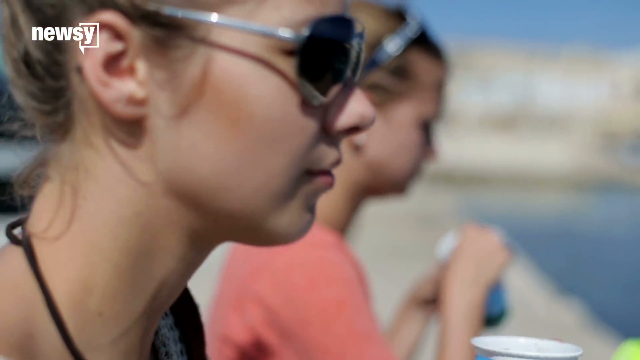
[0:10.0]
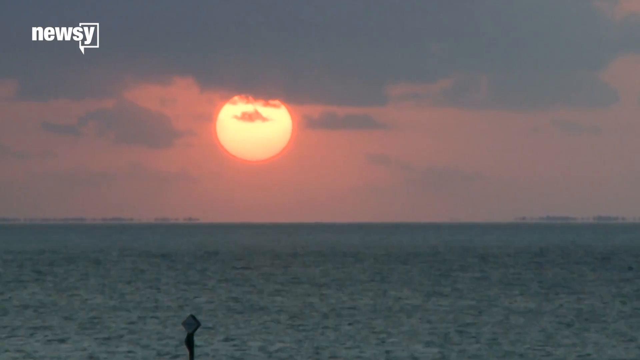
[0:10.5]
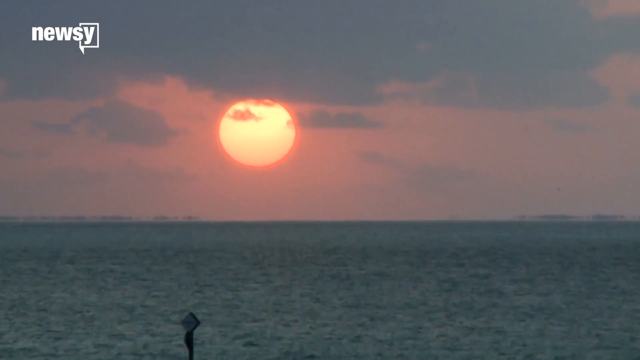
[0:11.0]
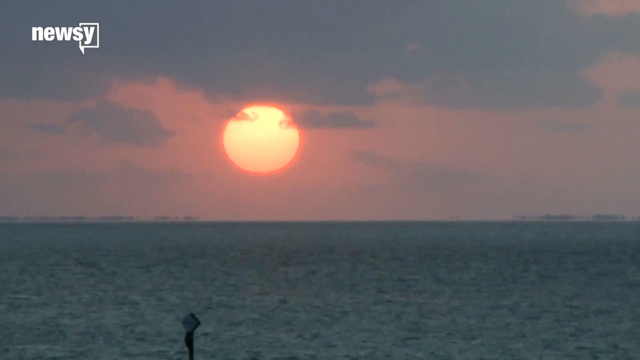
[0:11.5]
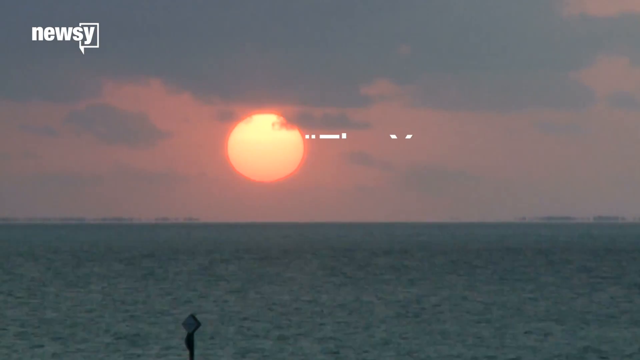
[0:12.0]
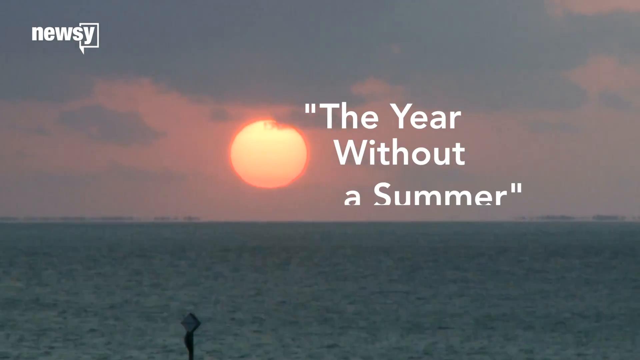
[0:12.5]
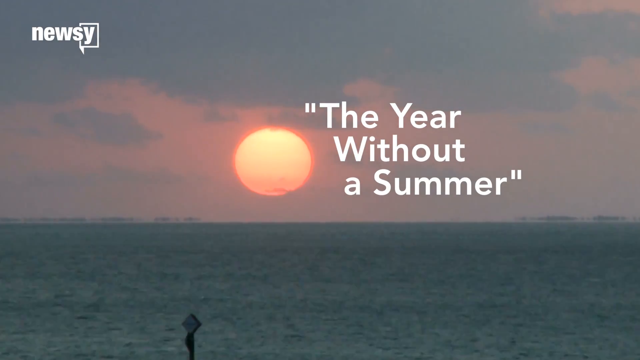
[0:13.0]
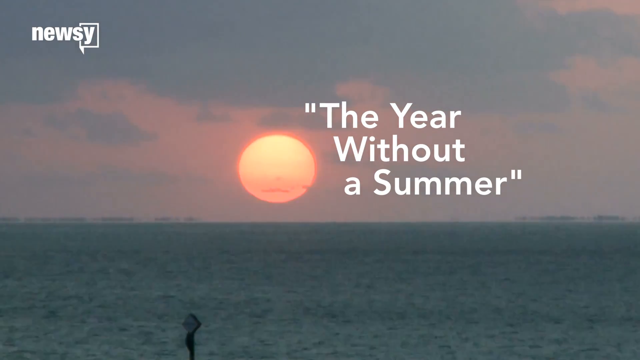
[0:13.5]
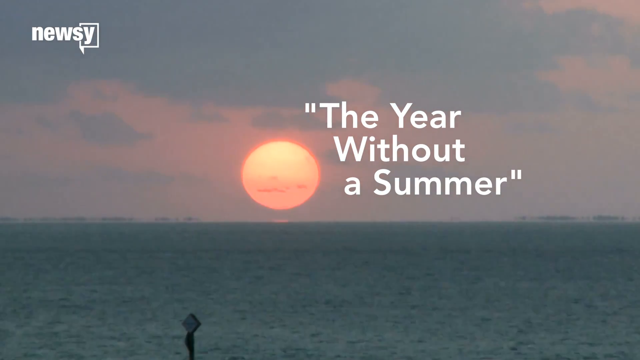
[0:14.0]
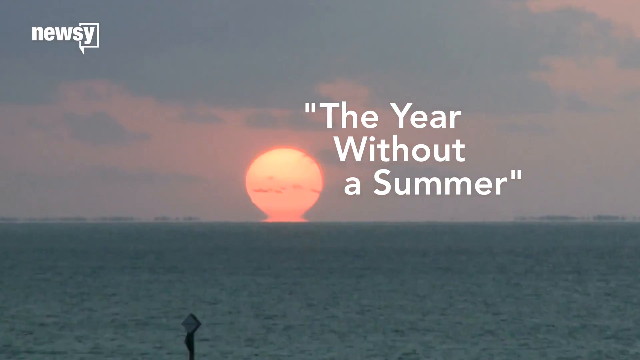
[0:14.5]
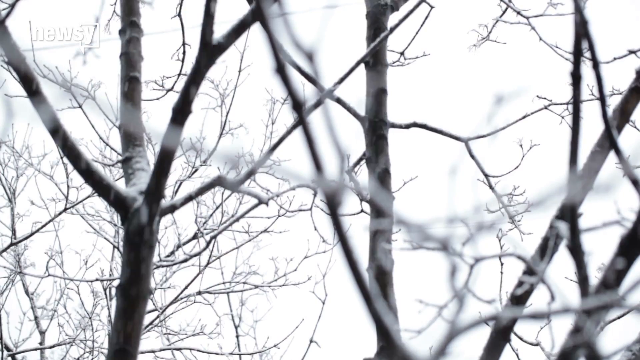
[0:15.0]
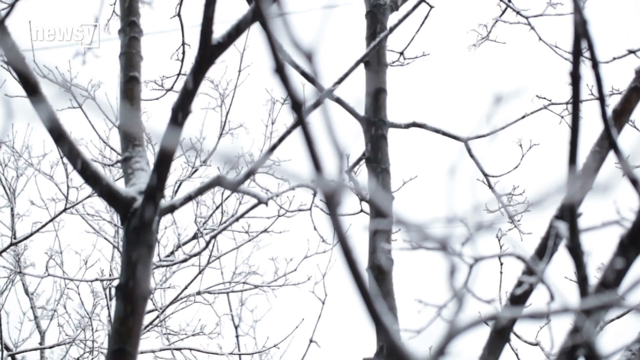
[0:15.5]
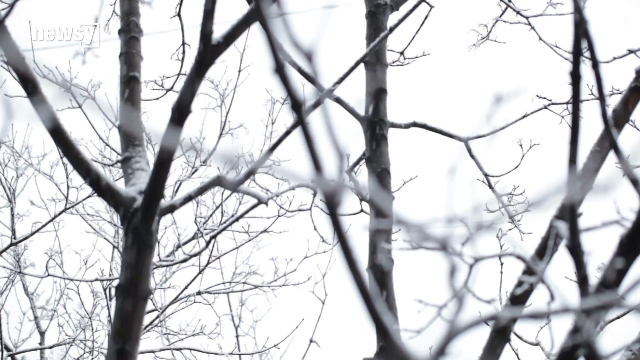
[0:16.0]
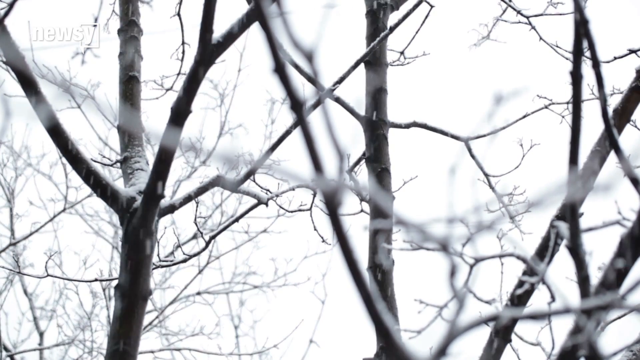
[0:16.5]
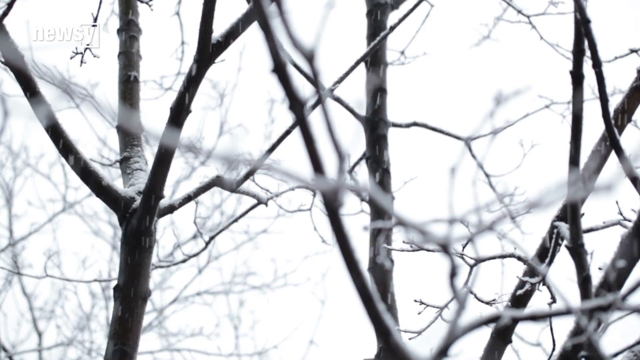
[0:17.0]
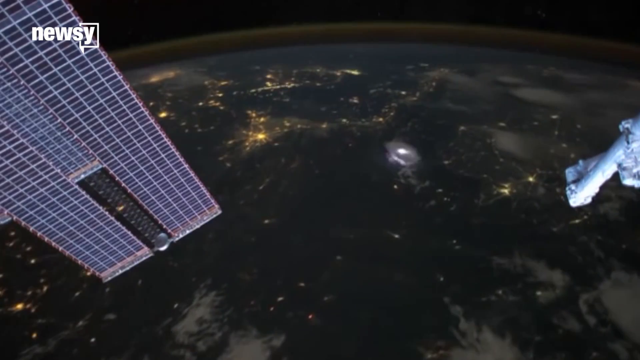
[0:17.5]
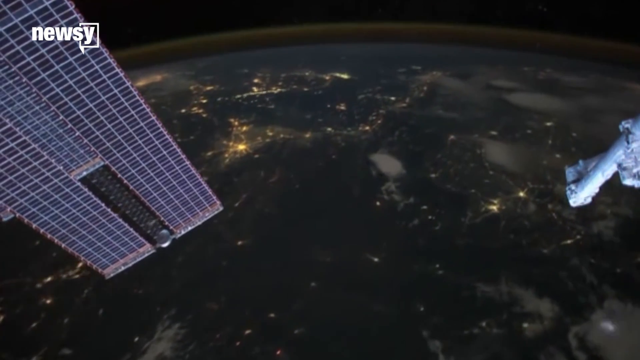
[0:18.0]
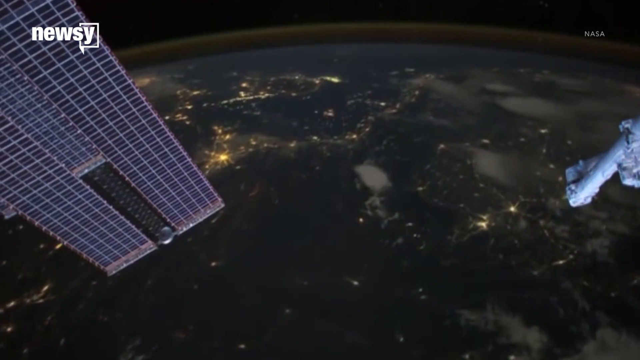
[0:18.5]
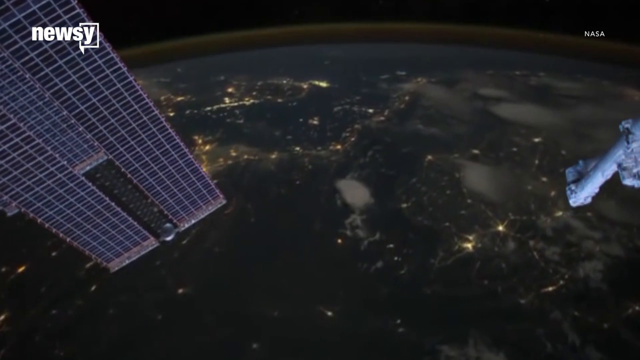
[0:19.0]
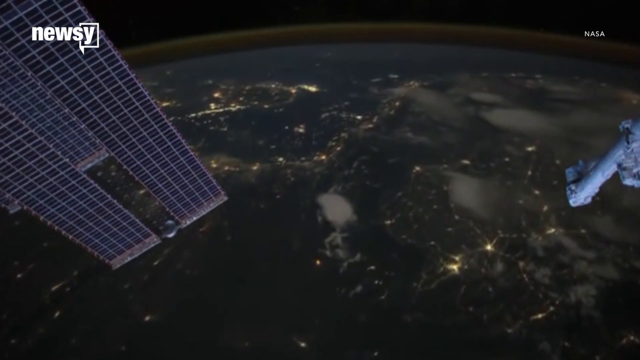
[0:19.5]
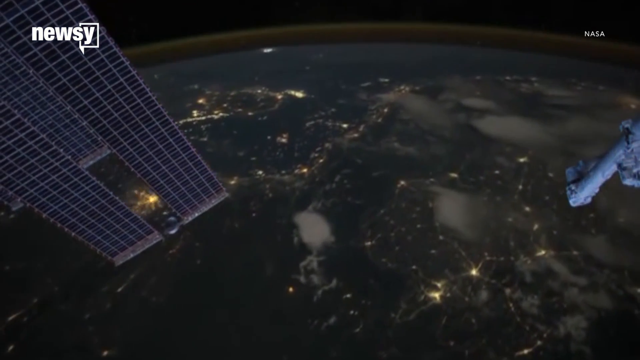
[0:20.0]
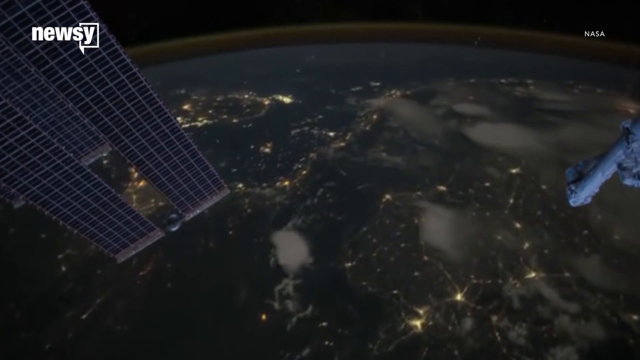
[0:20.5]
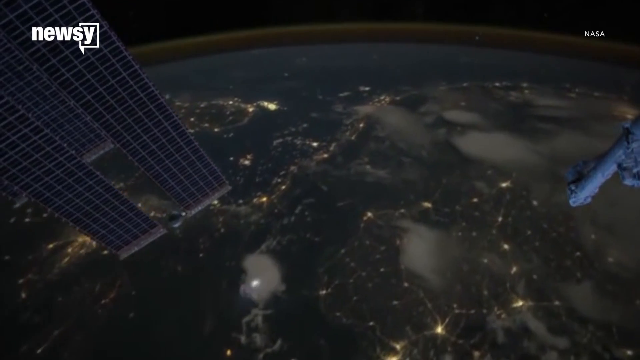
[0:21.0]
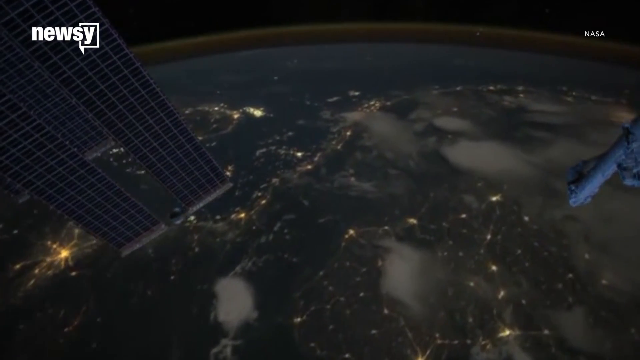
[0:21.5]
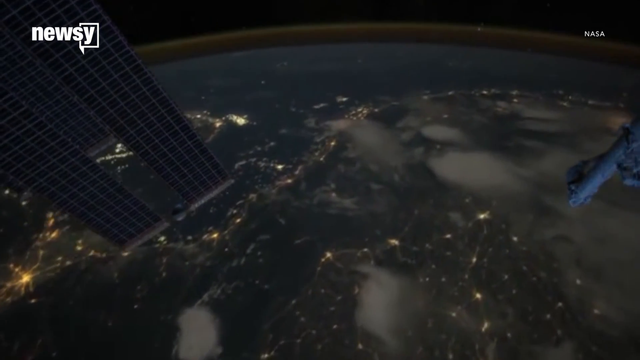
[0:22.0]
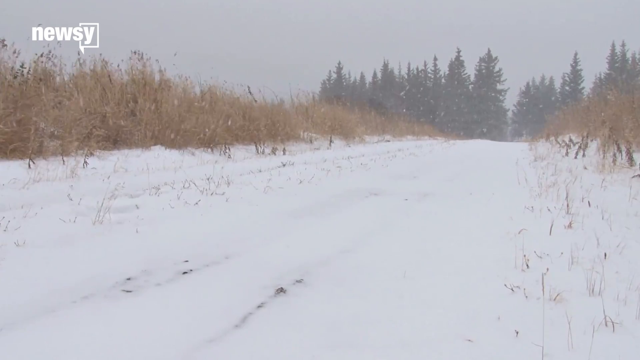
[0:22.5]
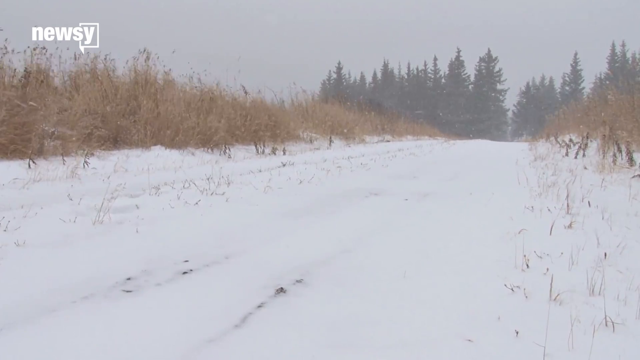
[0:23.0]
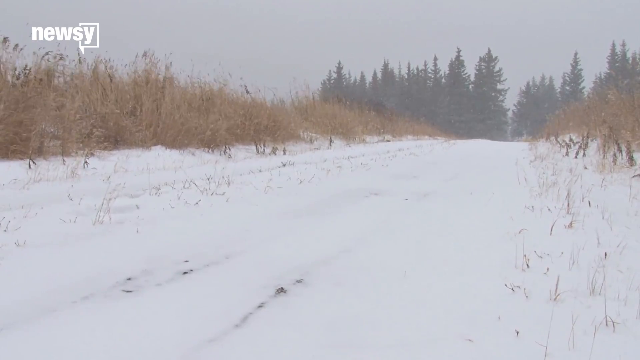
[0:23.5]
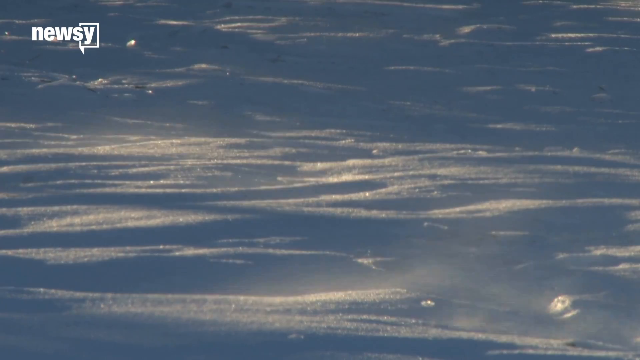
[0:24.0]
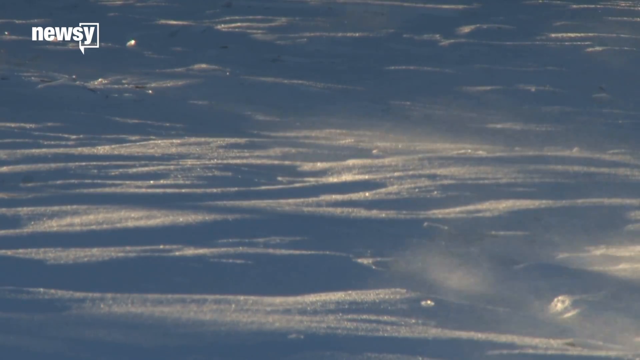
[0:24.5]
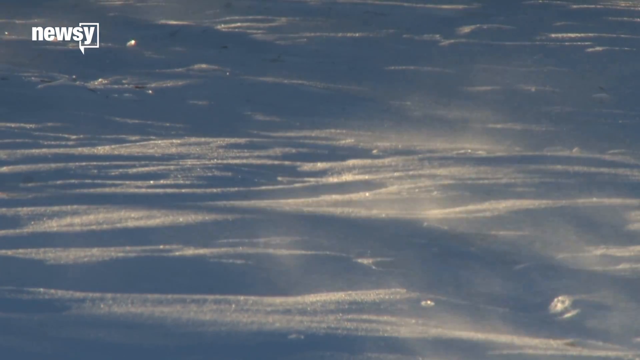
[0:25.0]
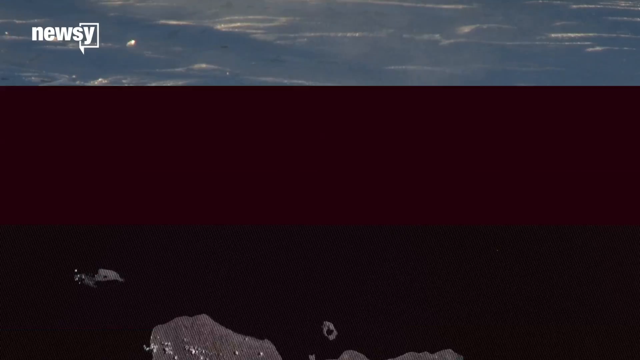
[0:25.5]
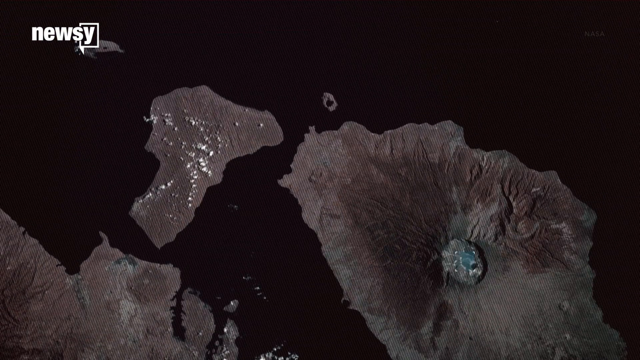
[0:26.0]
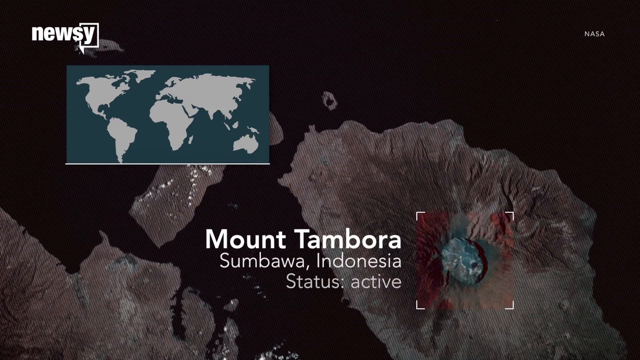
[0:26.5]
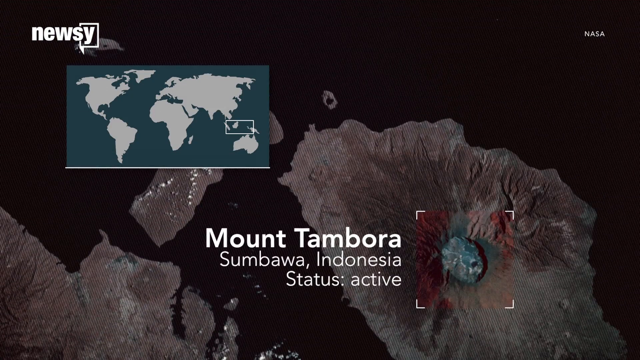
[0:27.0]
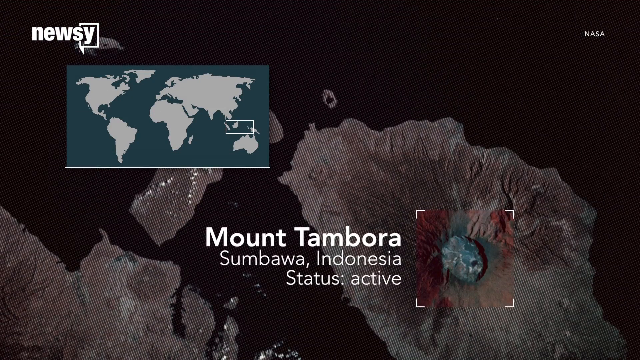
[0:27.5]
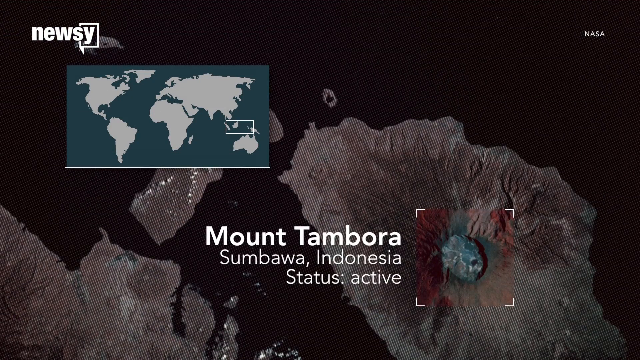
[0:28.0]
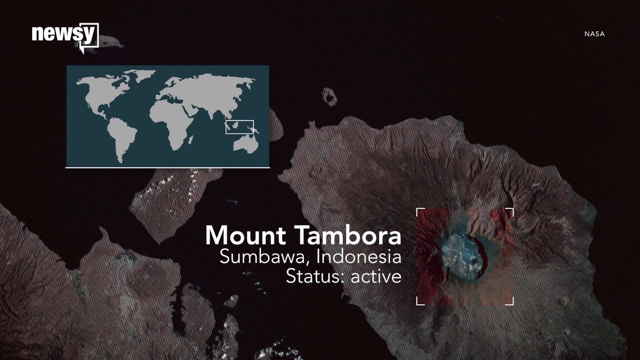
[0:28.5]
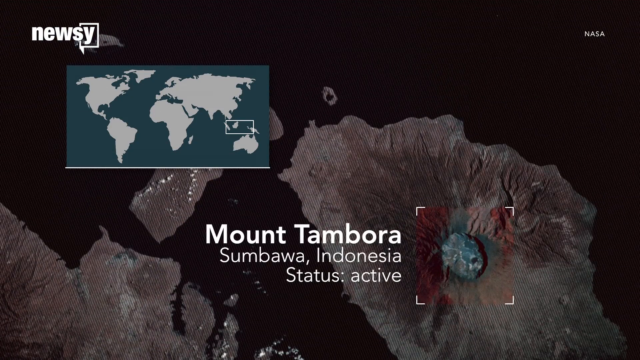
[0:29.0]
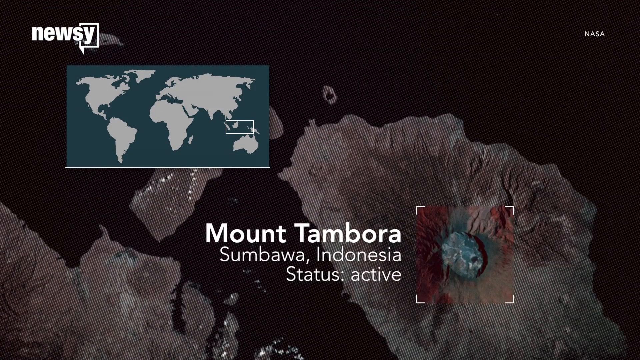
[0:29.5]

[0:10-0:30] The sun sets, starting in the top left and setting into the middle of the screen. It is a very deep orange glow with an orange outer edge, with grey clouds in the background. White text to the right of the sun reads "the year without a summer" in quotation marks, and a logo for Newsy is in the top left. The video changes to bare, snow-topped trees against a very snowy sky, with small snowflakes falling. Next, footage from the perspective of a satellite looks down at Earth, where multiple glowing parts are visible. Another snowy landscape follows, with some snow drifting, before a map appears on the screen with some terrain and white text reading "Mount Tambora, Subawa, Indonesia, status active".